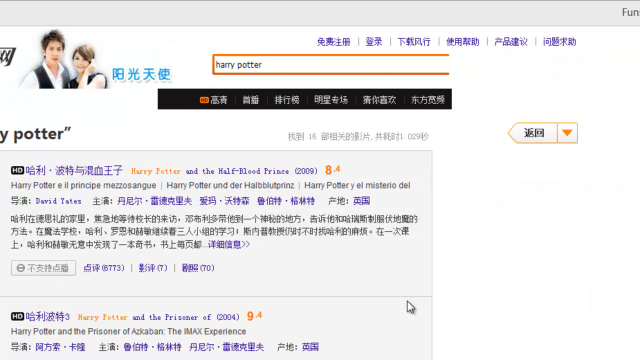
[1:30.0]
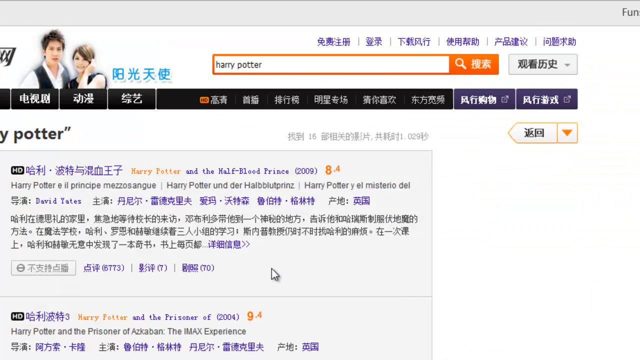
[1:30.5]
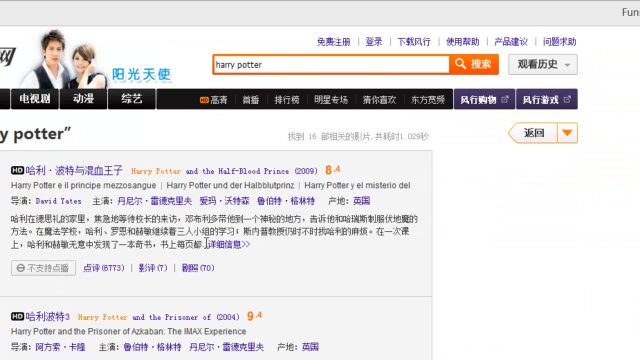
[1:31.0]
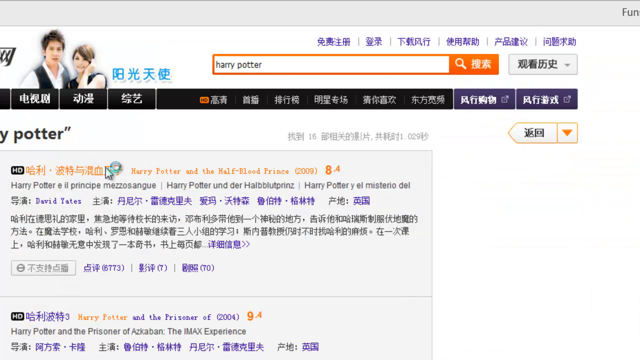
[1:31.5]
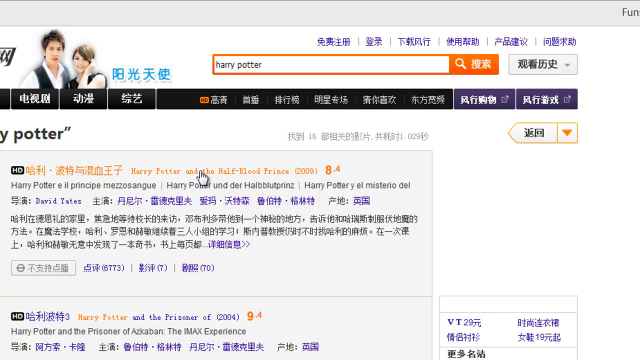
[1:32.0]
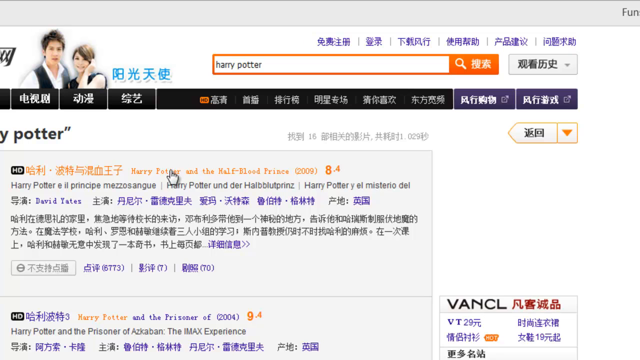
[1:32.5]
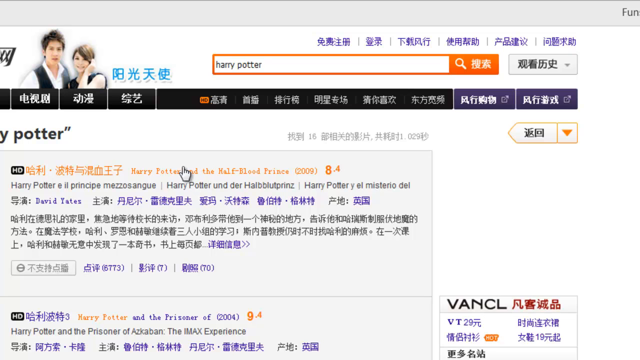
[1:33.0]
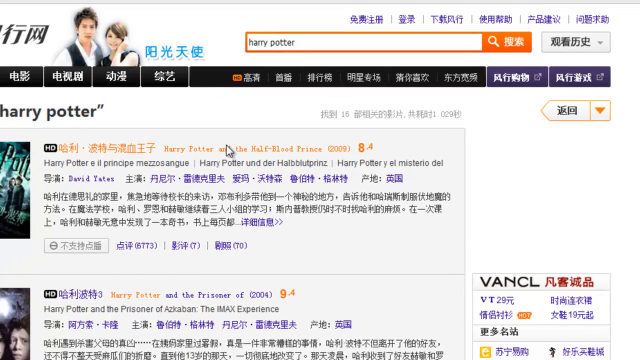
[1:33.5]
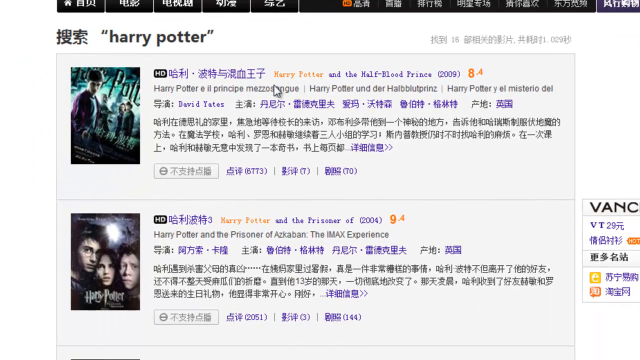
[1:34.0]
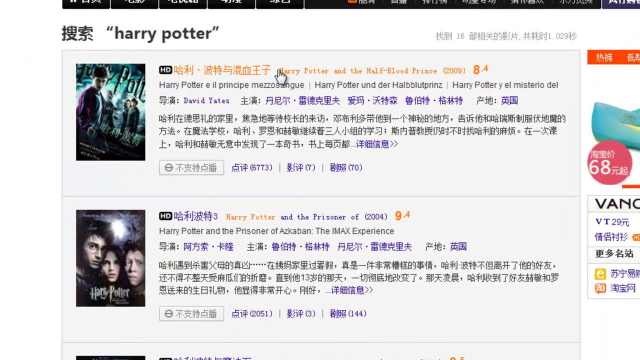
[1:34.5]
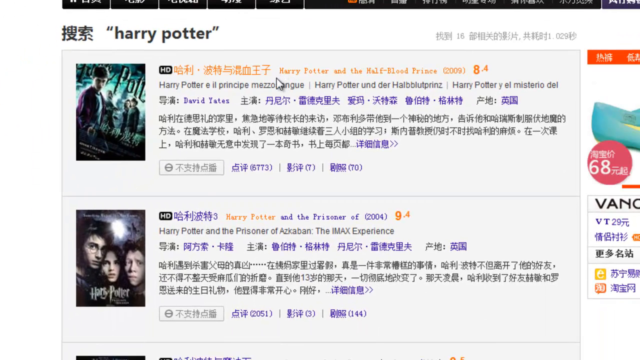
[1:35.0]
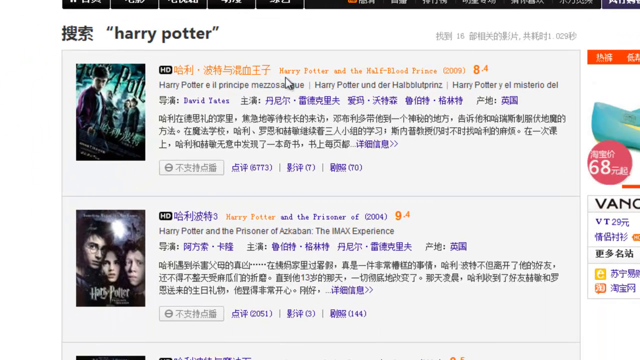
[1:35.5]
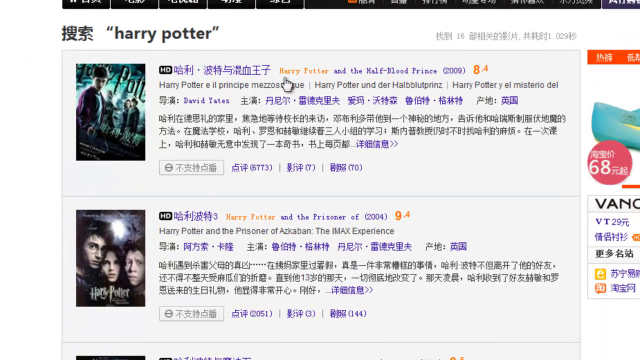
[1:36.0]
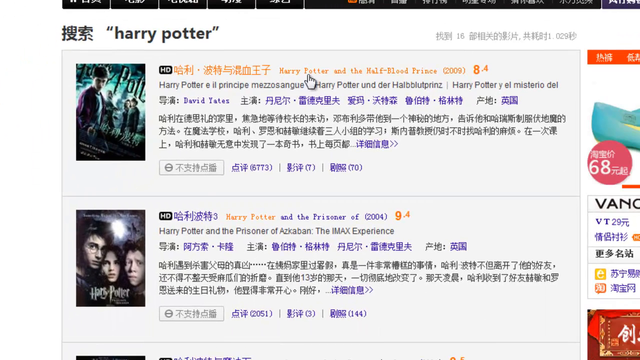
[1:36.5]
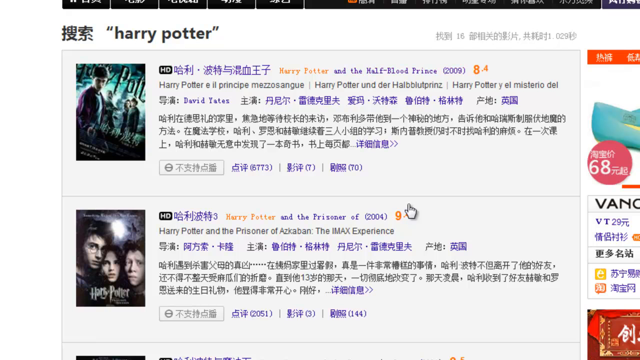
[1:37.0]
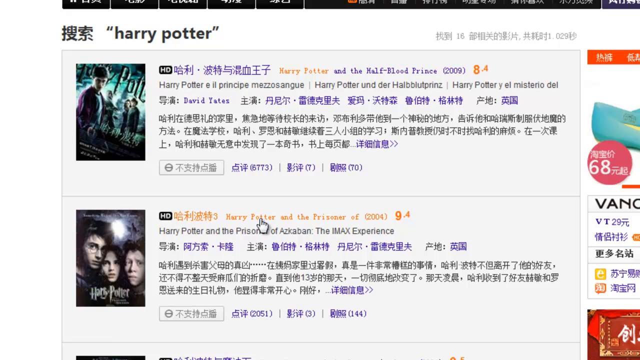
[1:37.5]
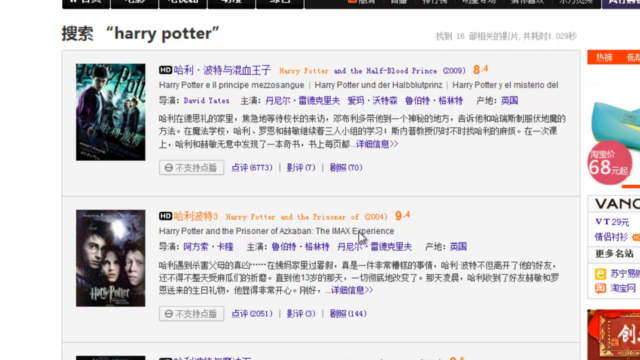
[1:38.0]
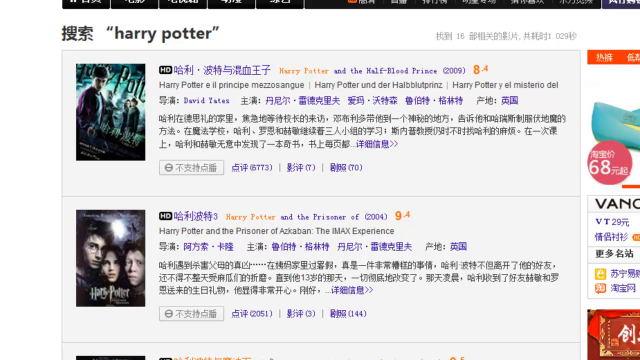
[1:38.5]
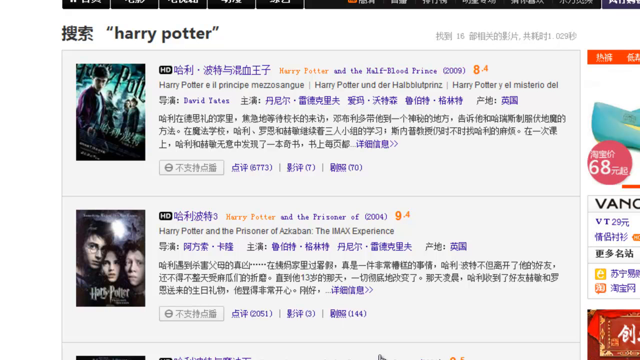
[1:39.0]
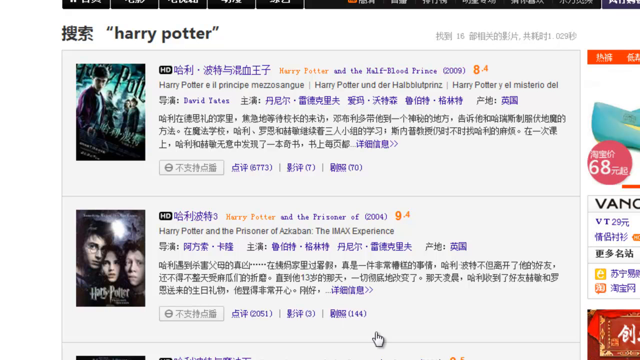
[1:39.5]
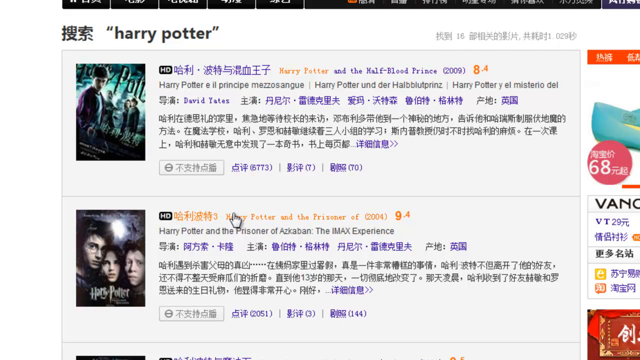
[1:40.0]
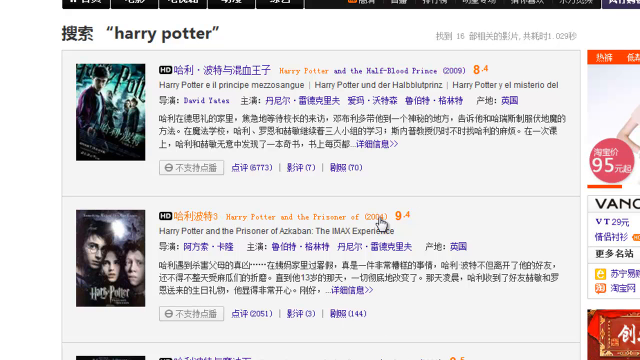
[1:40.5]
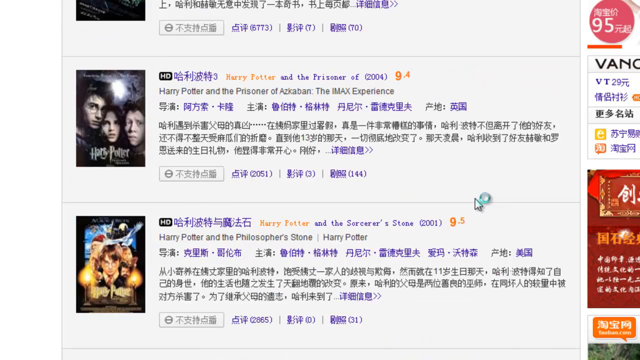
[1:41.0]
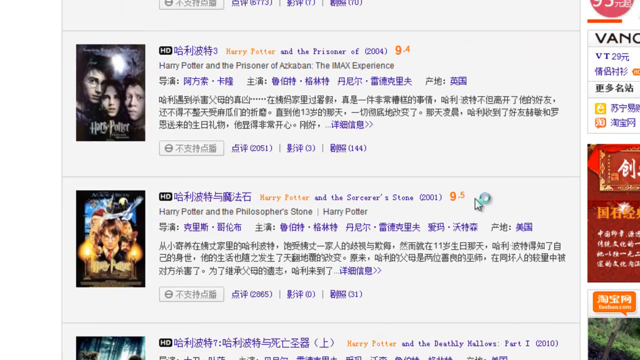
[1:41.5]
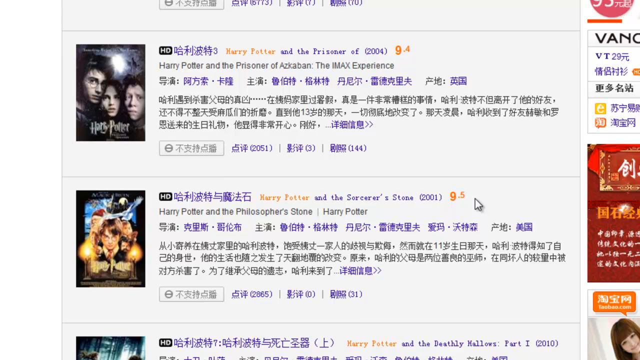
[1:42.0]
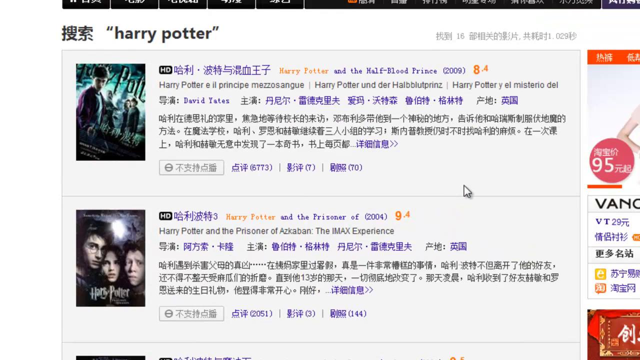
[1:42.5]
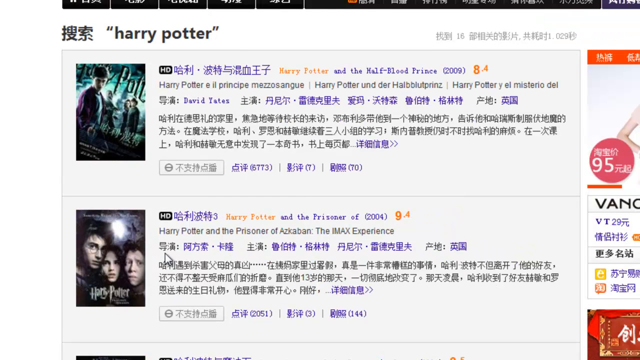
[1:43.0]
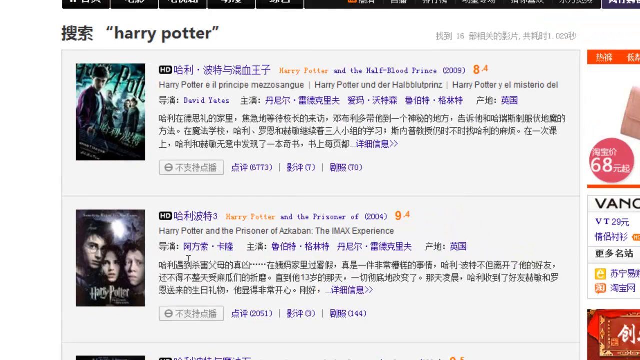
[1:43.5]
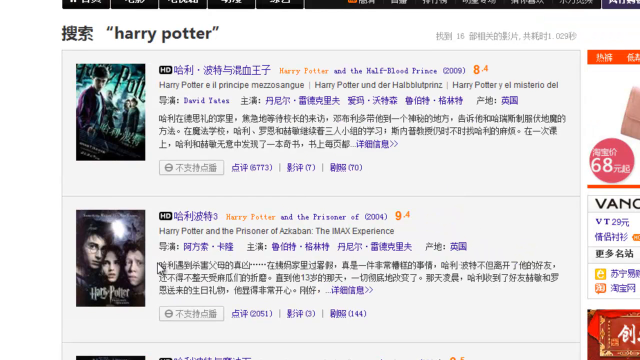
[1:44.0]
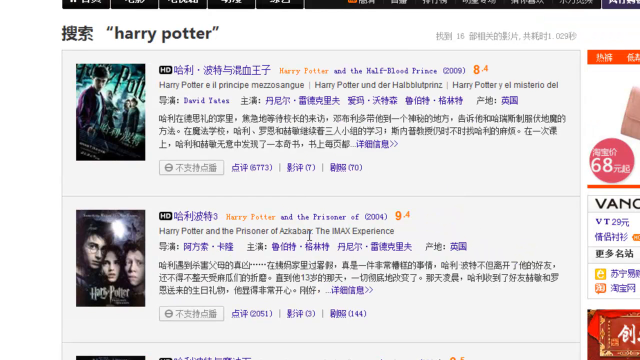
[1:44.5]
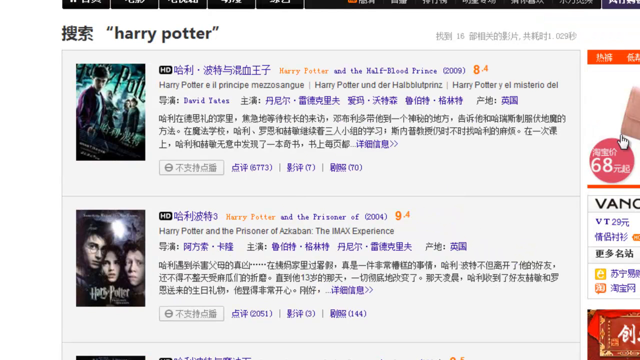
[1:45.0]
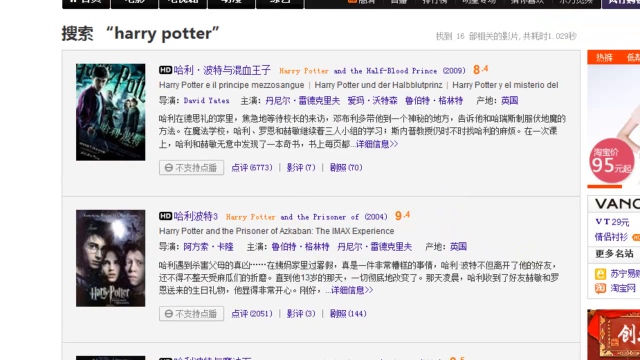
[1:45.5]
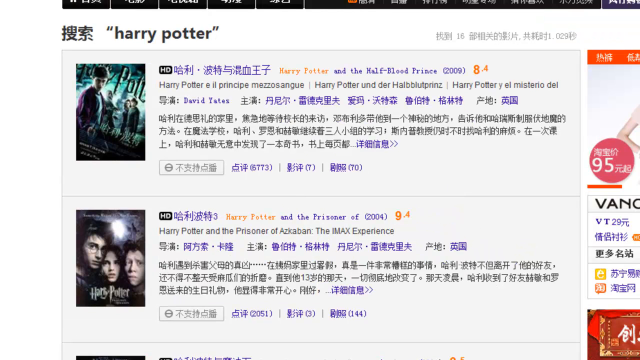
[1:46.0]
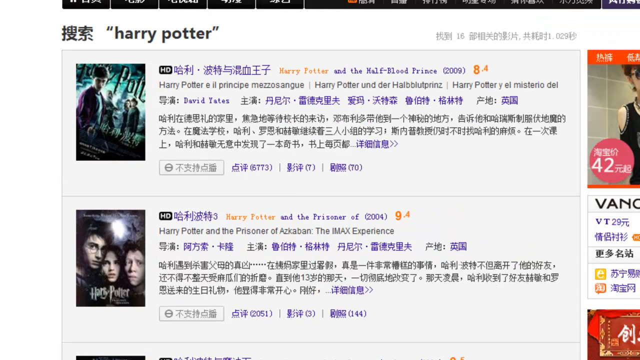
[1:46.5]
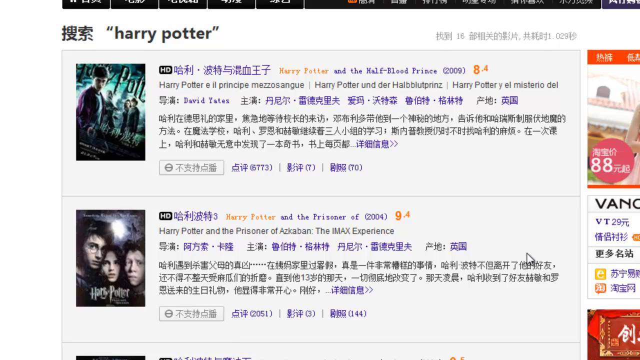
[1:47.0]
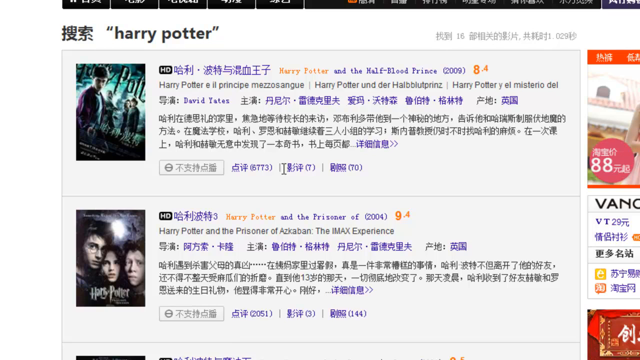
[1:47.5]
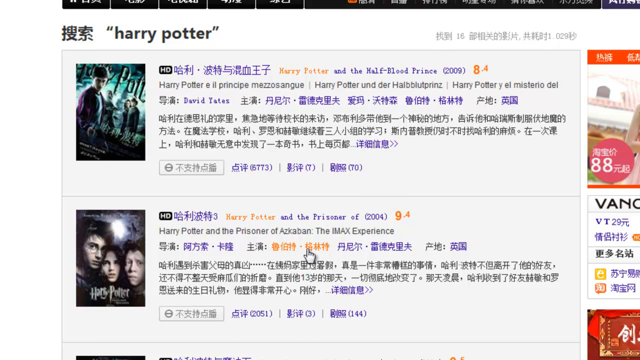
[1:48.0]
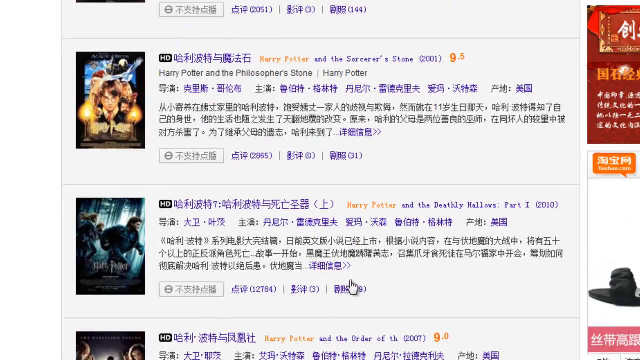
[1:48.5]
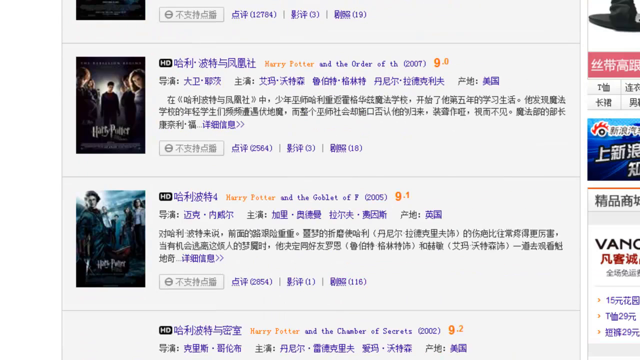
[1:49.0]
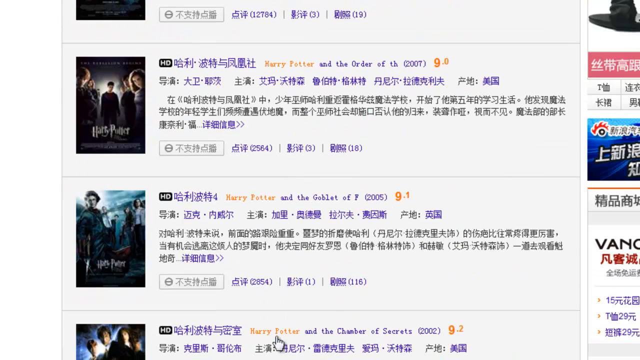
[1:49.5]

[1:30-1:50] The user is in the search bar at the top right of the website, where "Harry Potter" has been entered. After he enters it, a list of different sources for downloading the movie appears on the right-hand side of the screen.